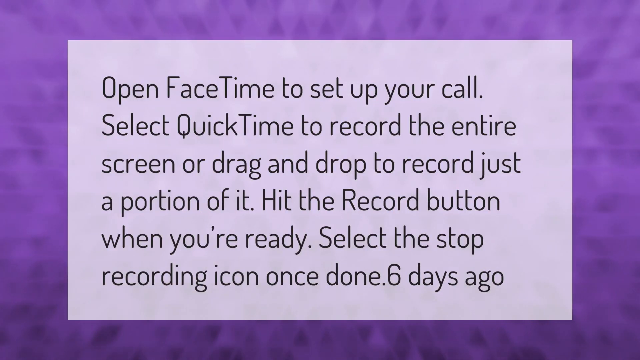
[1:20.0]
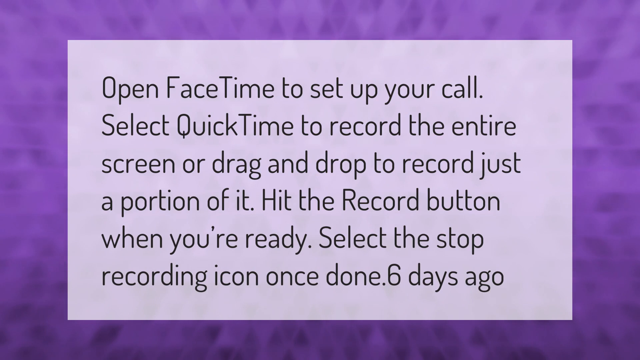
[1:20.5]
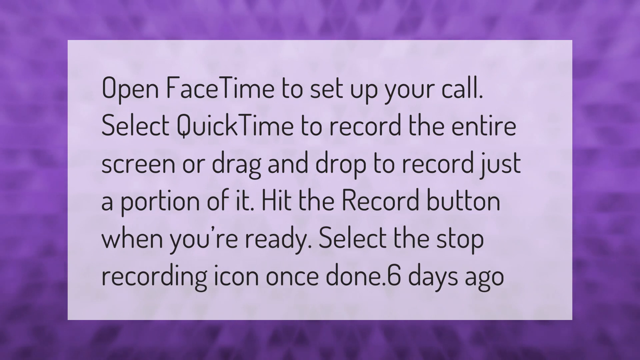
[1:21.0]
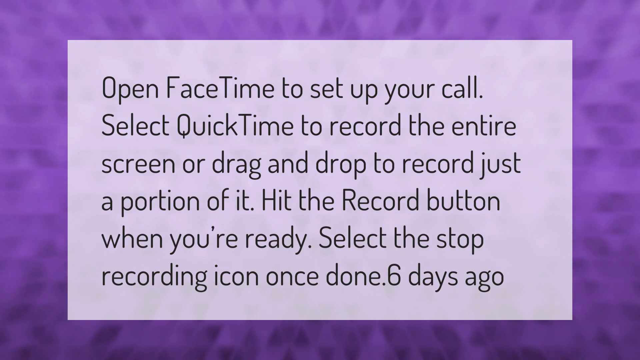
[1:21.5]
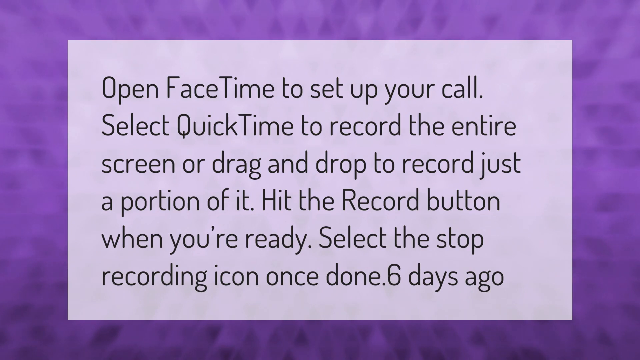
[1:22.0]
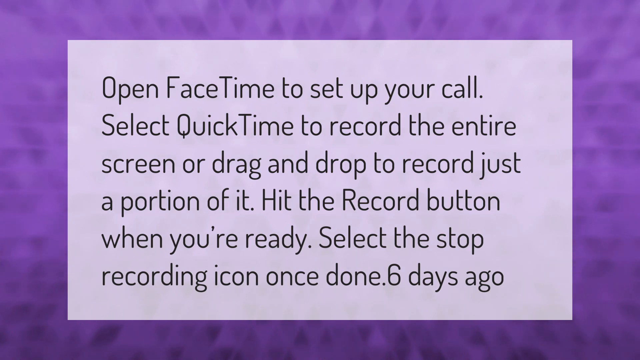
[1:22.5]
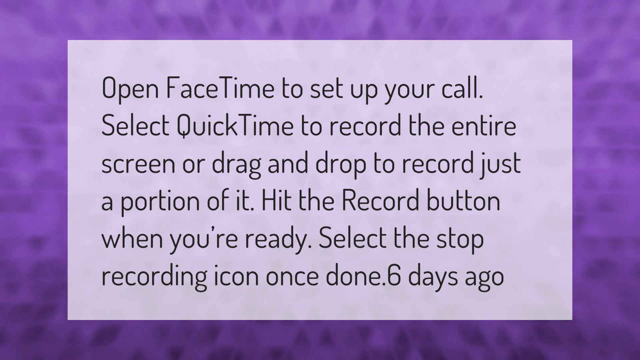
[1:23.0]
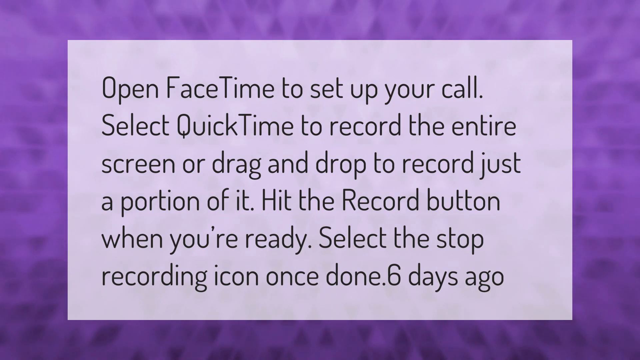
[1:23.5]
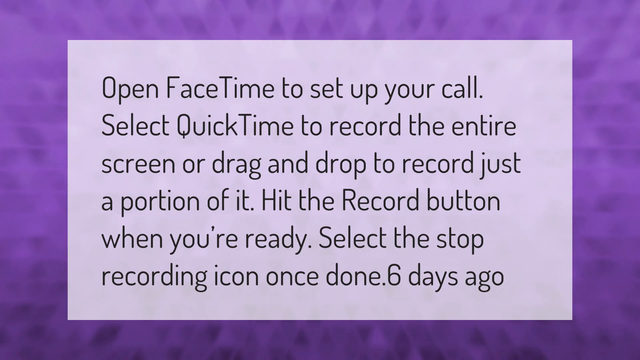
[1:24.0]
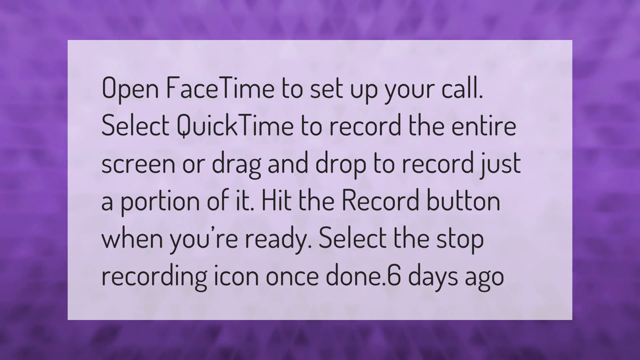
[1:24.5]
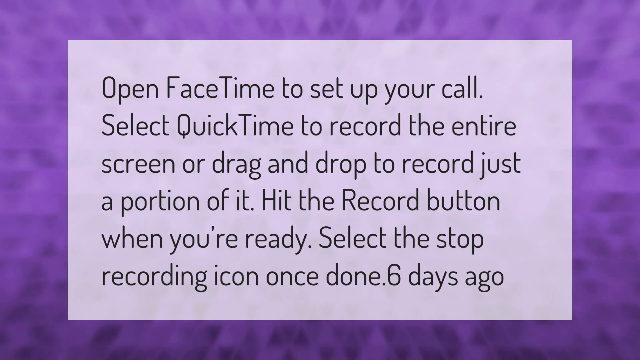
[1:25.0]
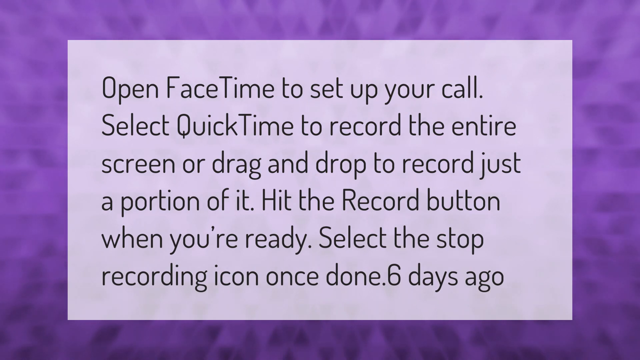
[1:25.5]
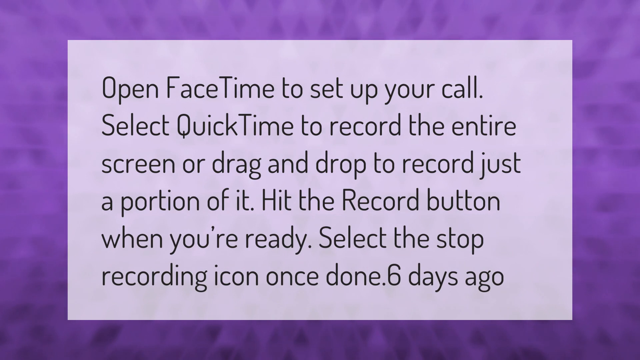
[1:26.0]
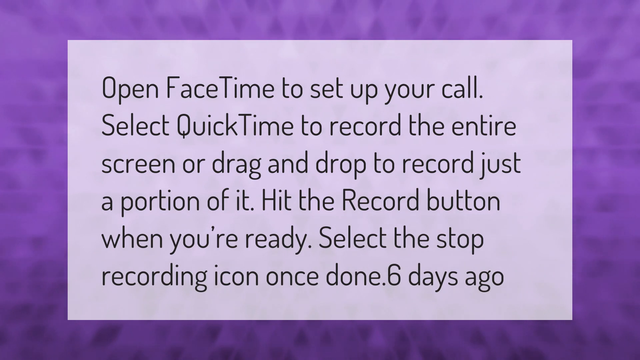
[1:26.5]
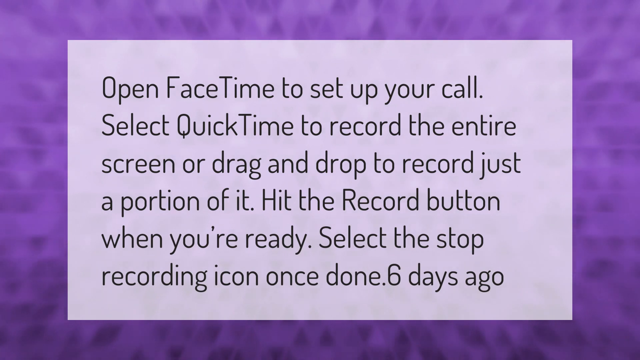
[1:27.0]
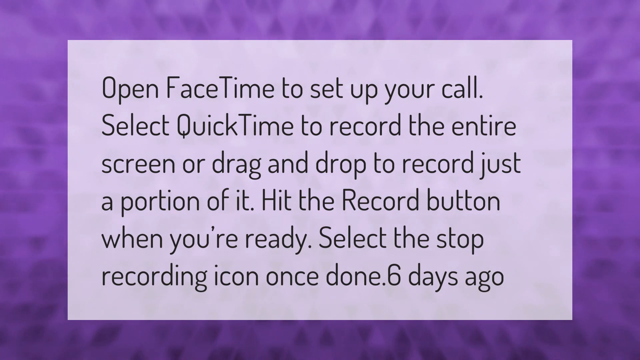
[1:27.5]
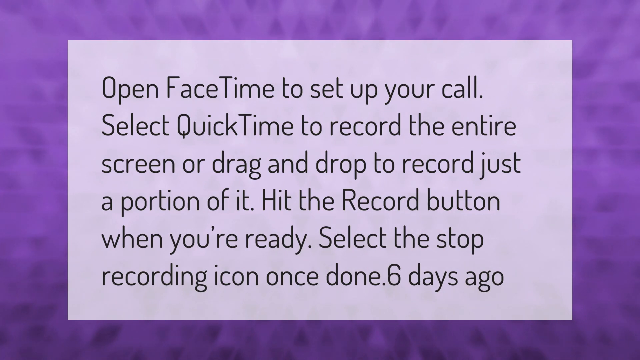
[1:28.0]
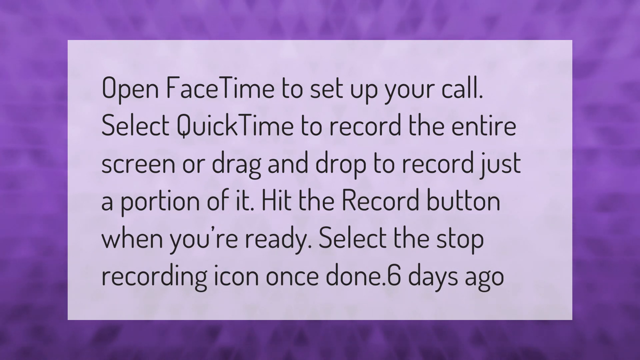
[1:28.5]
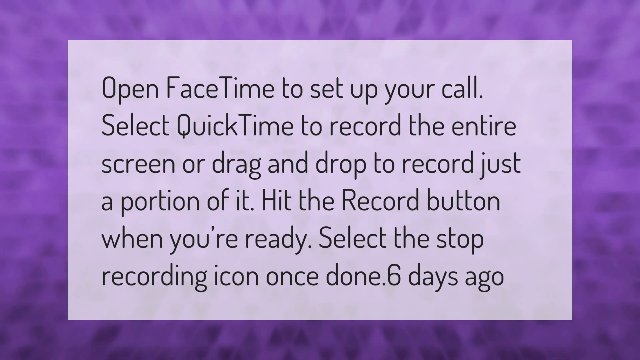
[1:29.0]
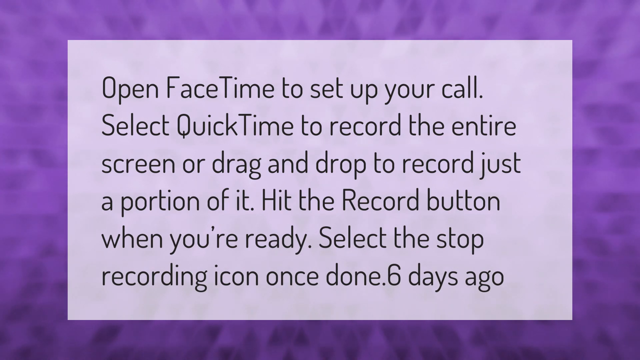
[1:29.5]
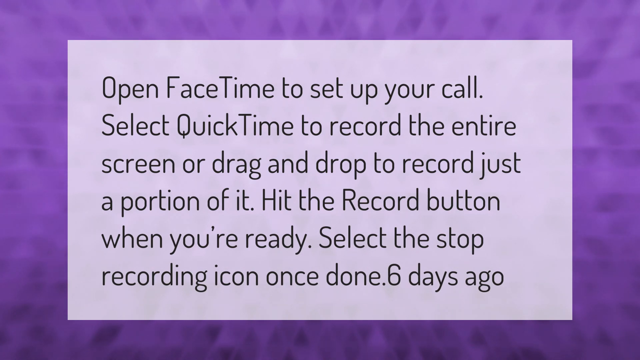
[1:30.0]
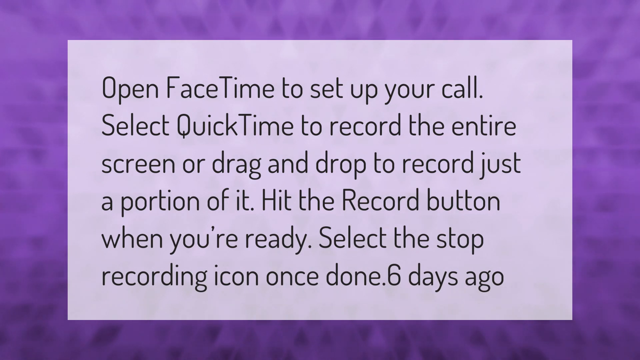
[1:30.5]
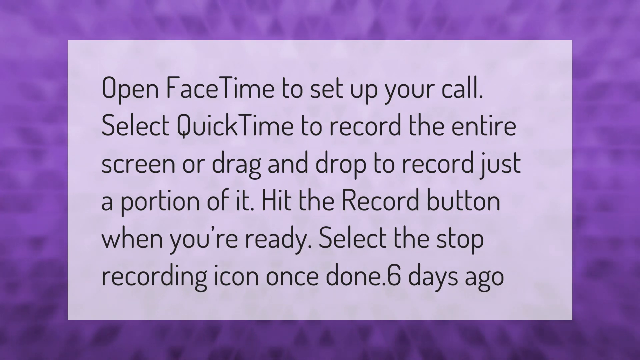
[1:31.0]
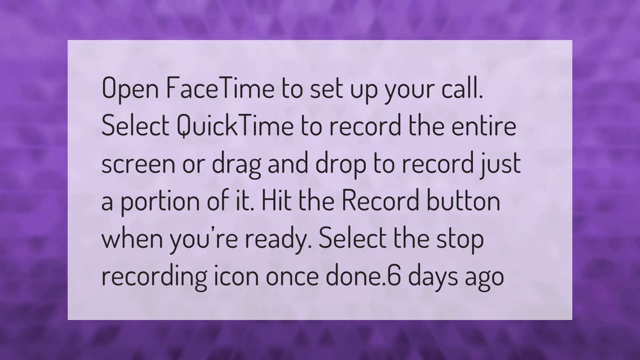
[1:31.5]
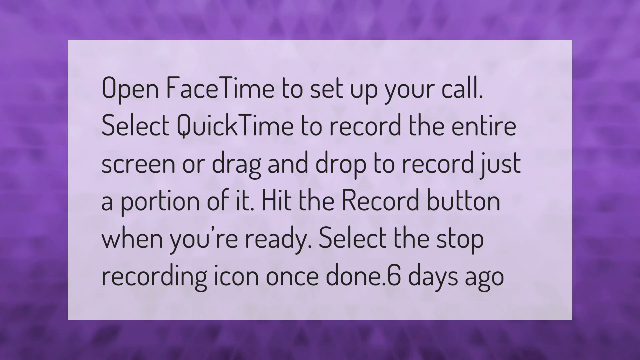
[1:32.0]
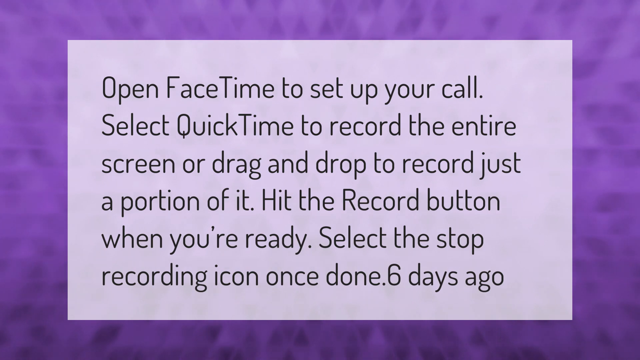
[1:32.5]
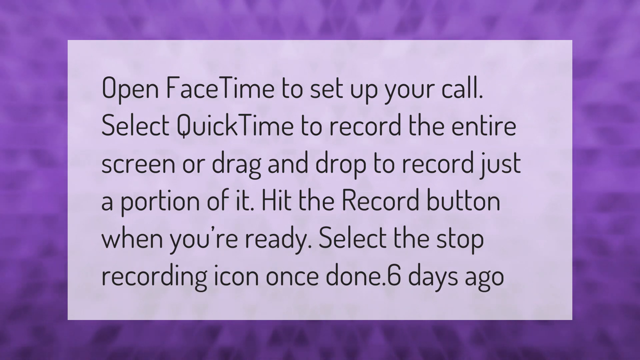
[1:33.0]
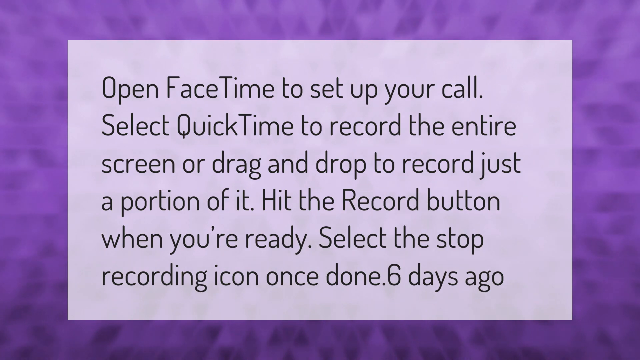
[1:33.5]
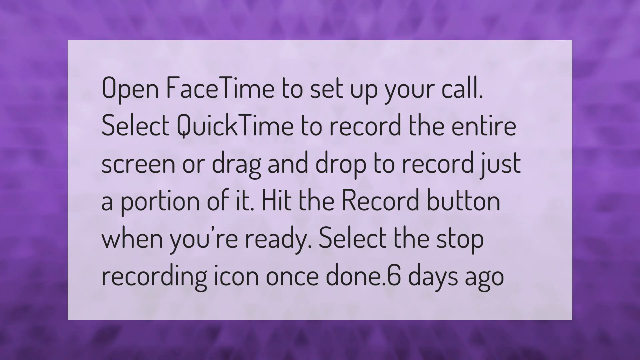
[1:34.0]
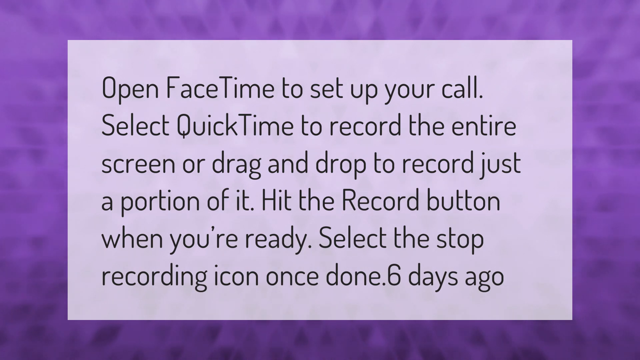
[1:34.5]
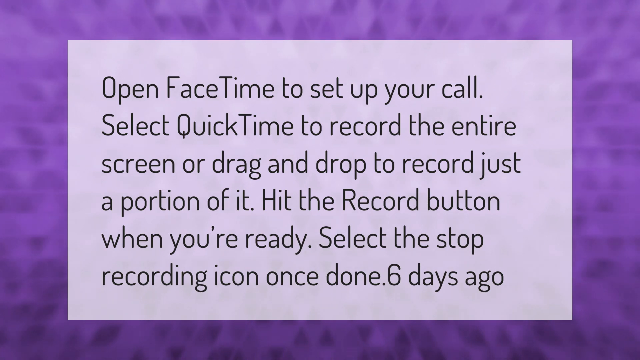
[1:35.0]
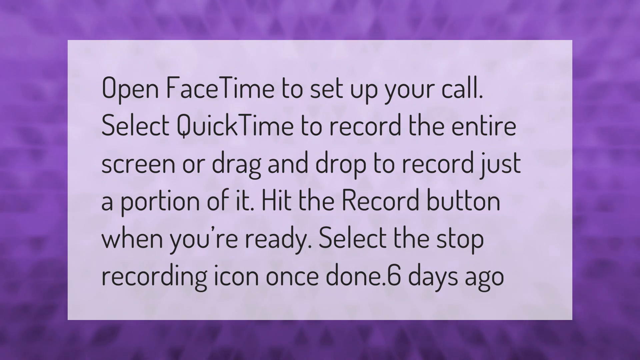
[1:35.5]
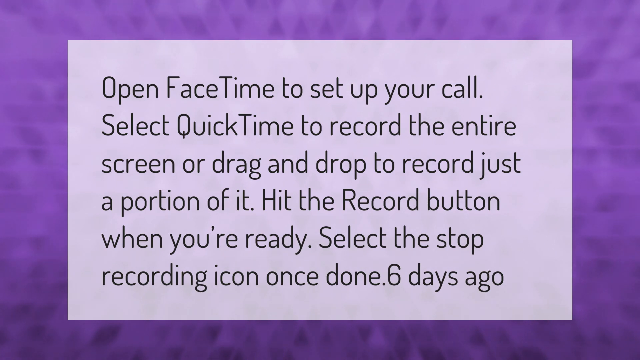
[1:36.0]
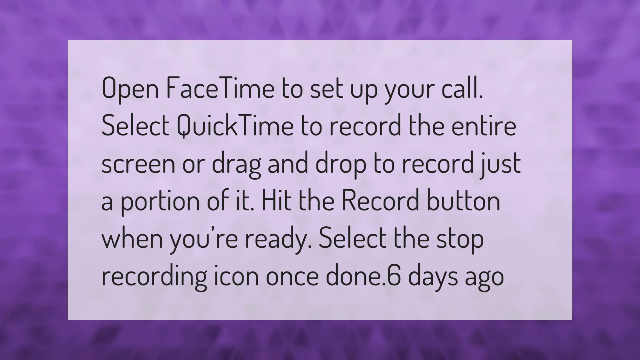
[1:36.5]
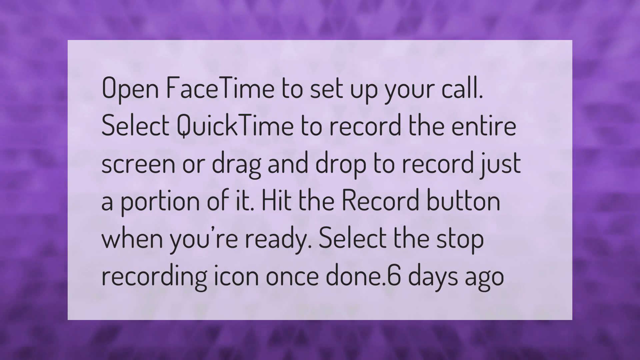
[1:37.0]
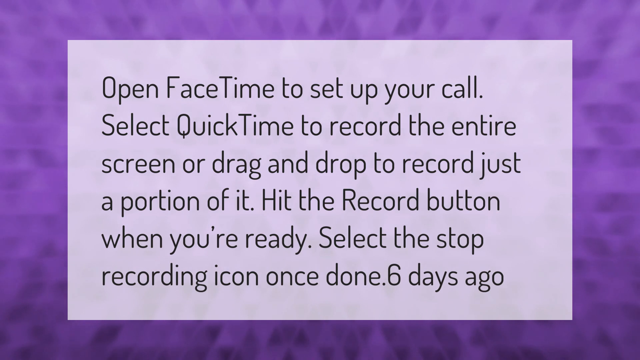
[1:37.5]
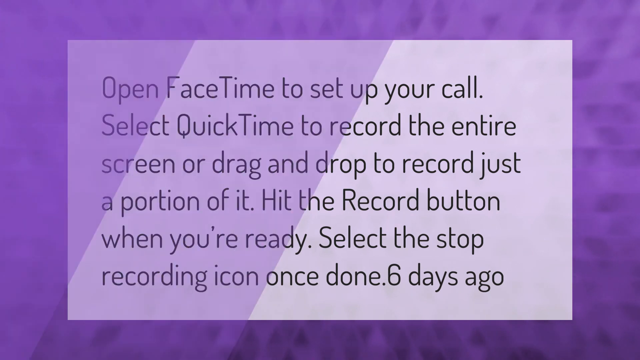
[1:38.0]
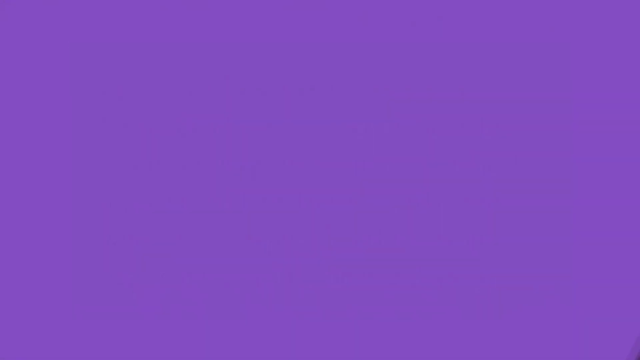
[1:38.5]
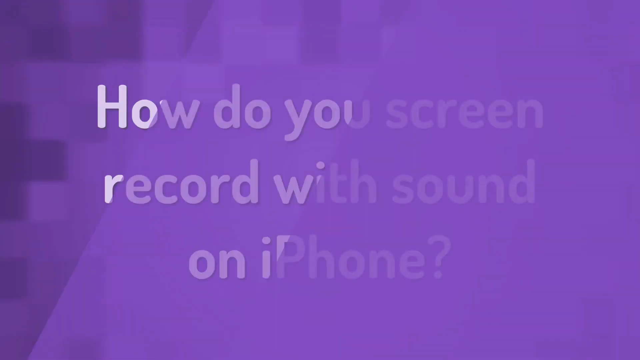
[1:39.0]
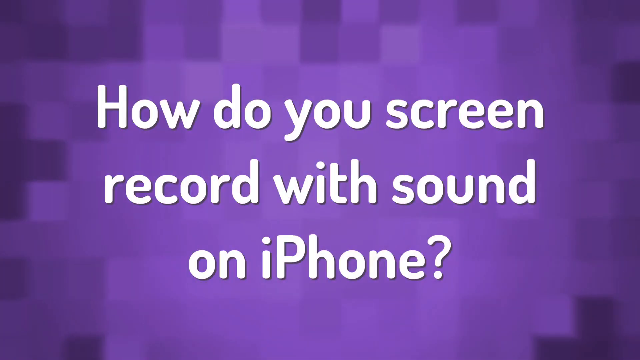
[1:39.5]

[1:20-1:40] A lavender background in various shades, light and darker, is patterned with small triangles, some pointing upward, some downward, some put together up and down as well as side to side. A light lavender box covers almost the entire middle of the screen, with black text reading "open FaceTime to set up your call. Select QuickTime to record the entire screen or drag and drop to record just a portion of it. Hit the record button when you're ready. Select to stop recording. Six days ago." The video transitions to a square-pixelated background in shades of lavender from light to darker, with white text over the screen reading "how do you screen record with sound on iPhone?" The lavender background behind the text is solid and stationary, with no movement, like construction paper.